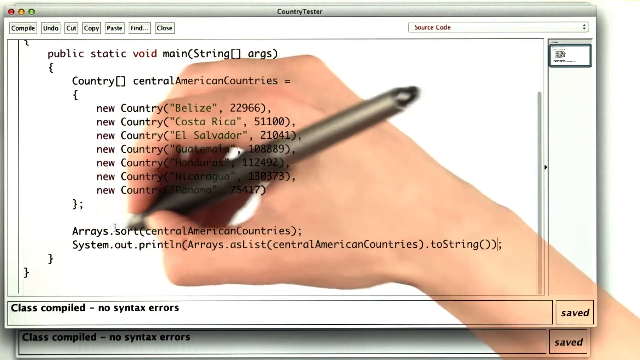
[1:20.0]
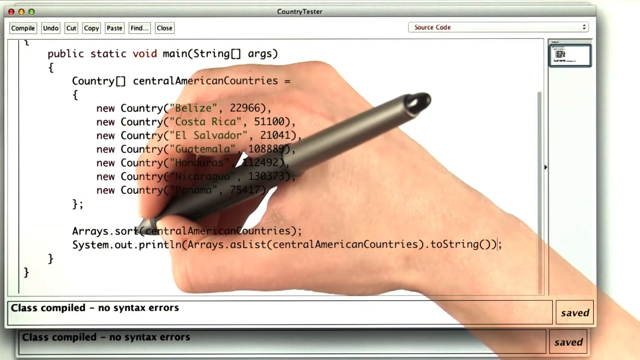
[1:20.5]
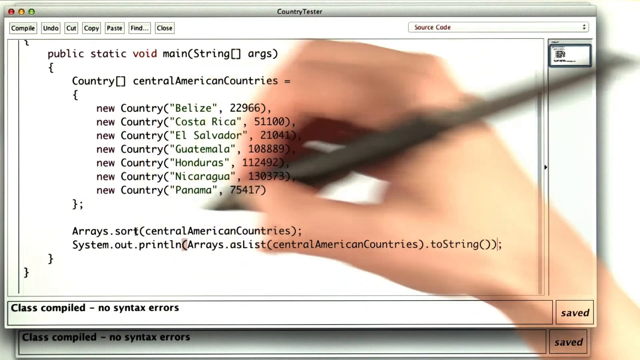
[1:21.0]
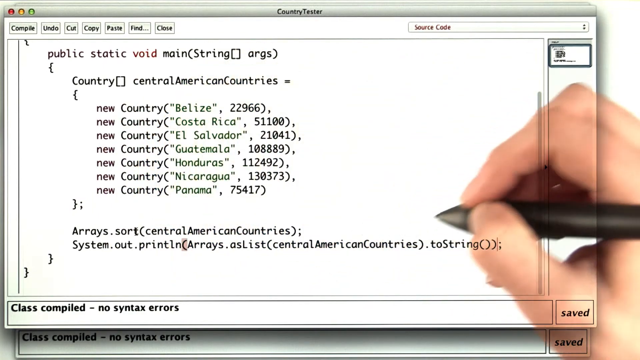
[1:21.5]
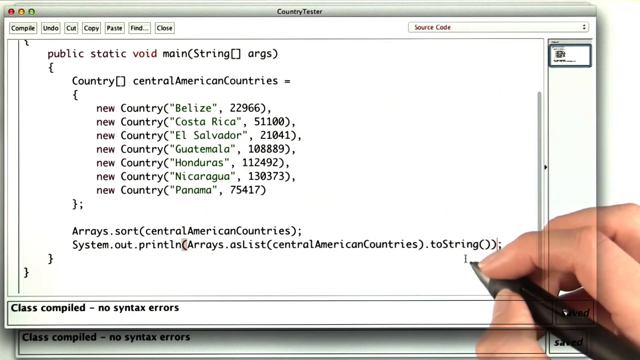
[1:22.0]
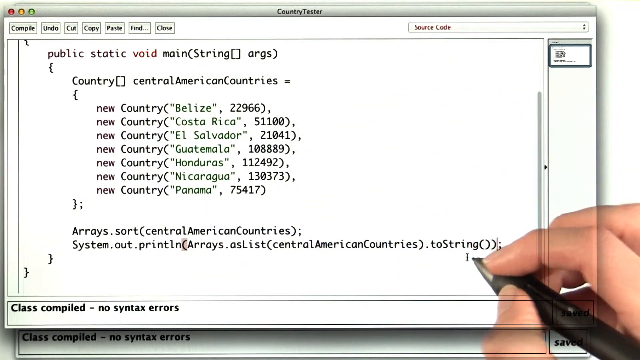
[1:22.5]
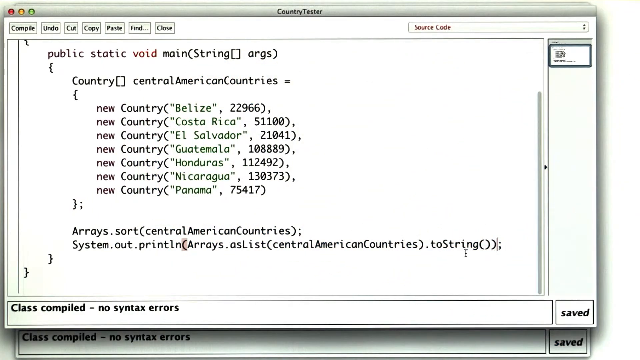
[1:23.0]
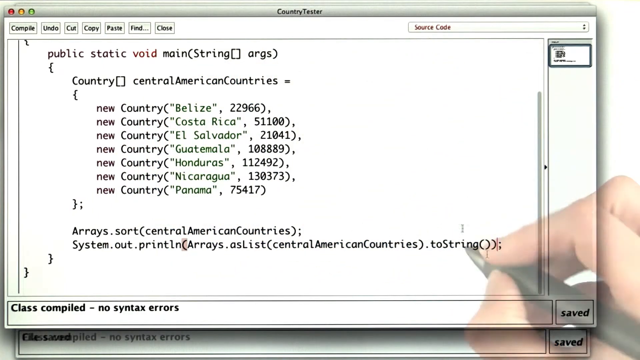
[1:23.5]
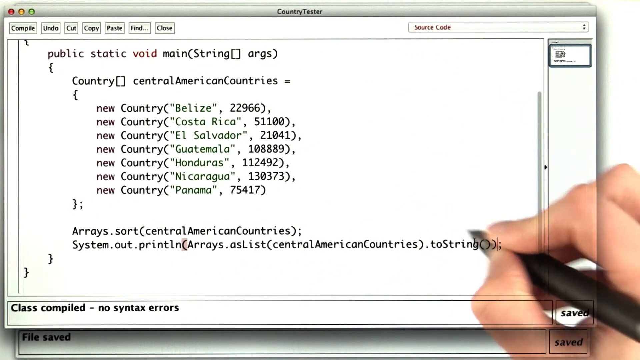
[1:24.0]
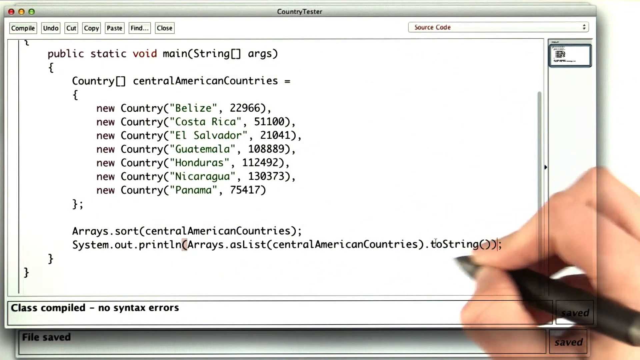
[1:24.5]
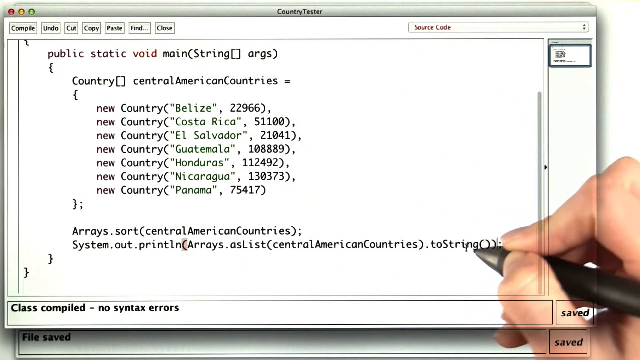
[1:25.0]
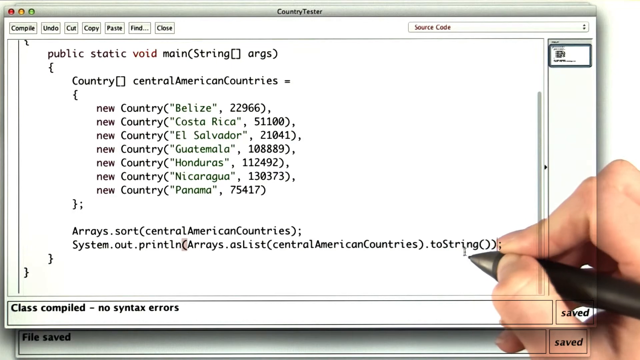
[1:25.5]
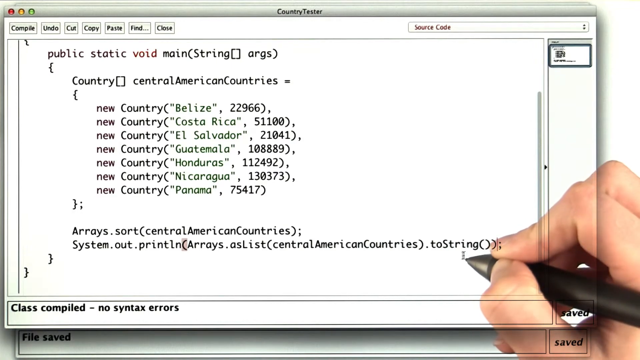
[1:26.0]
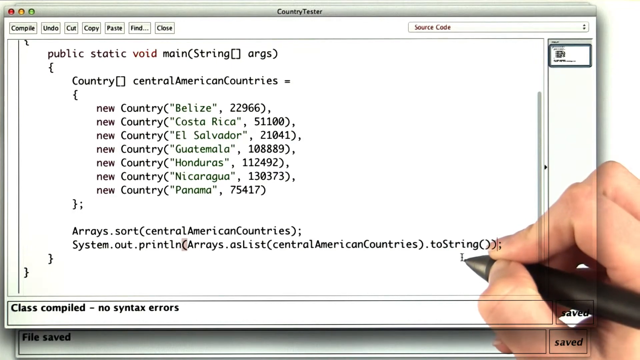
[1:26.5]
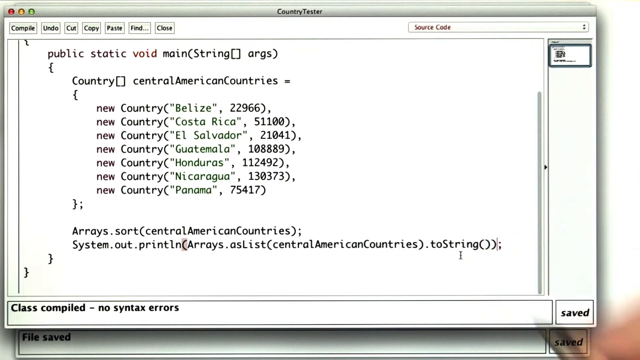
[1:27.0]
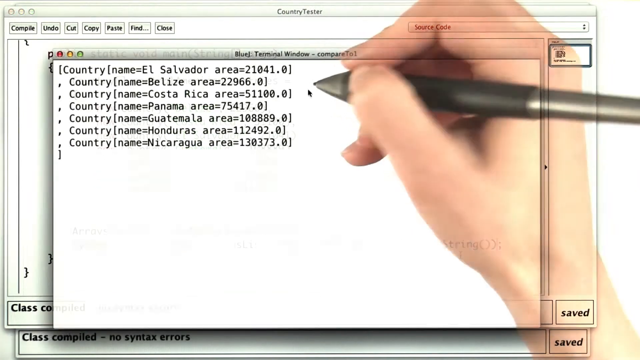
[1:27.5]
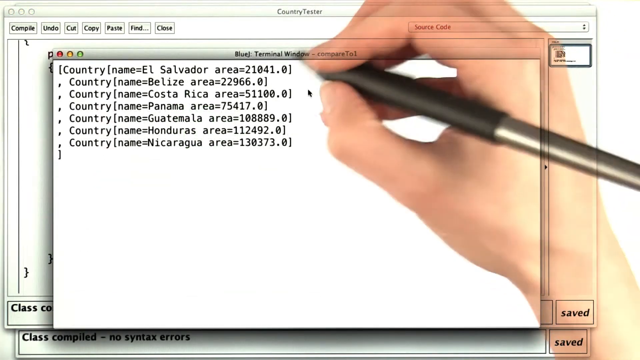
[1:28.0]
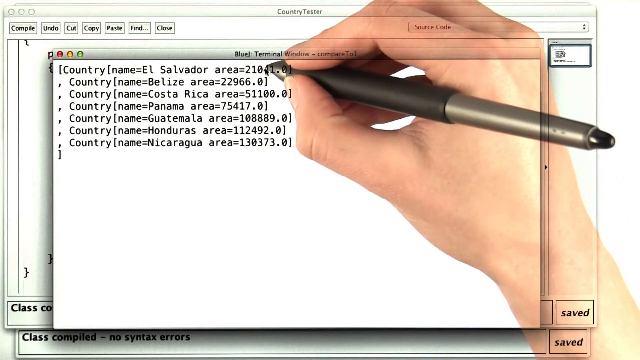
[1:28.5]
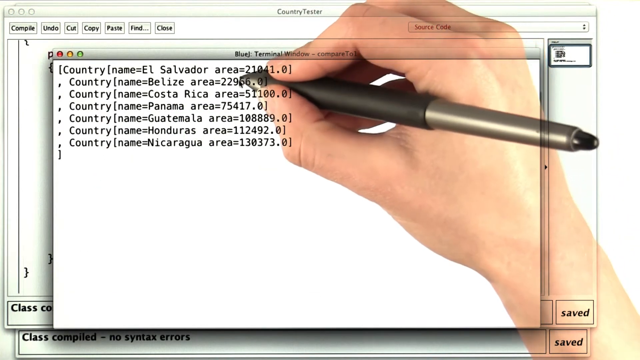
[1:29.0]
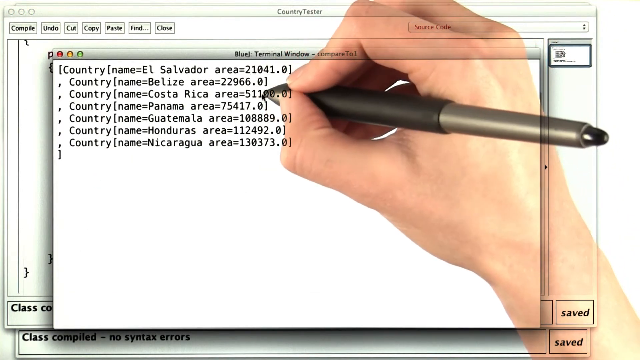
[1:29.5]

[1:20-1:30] The person focuses on the two-string section of the code. All of the data seems to have been added, and the focus is on the system.out.print section. Next to each country name there are some numbers, which the person works on perfecting. No highlighting is used; instead they circle the code with the pen and then kind of tap each one. The right-handed, Caucasian person uses a pen on their laptop, an Apple Mac with an iOS system, to sort or edit the code. The setting is unchanged.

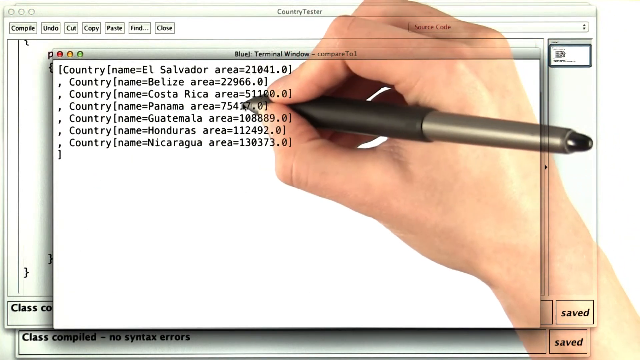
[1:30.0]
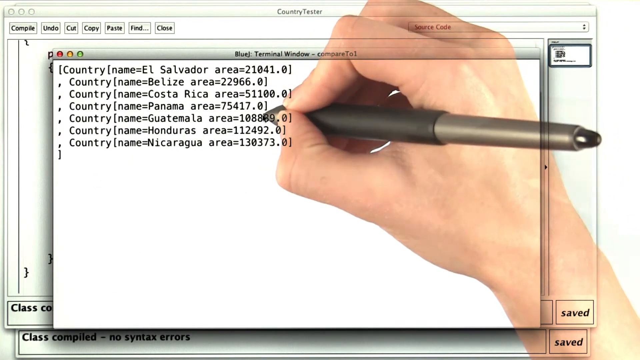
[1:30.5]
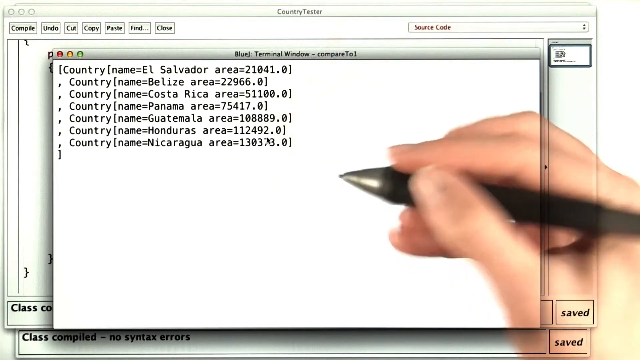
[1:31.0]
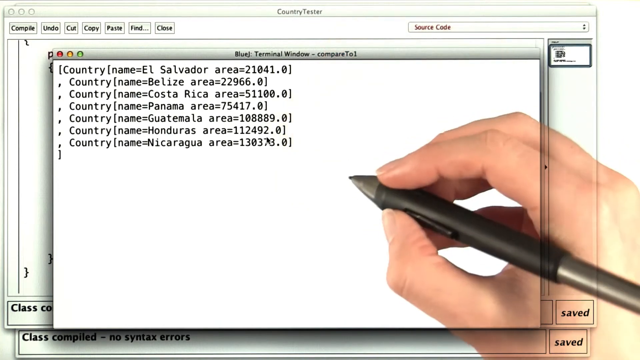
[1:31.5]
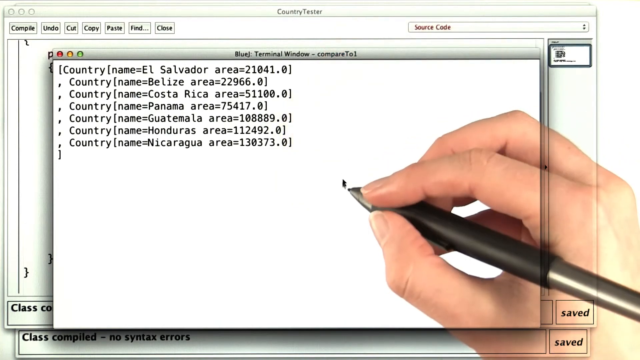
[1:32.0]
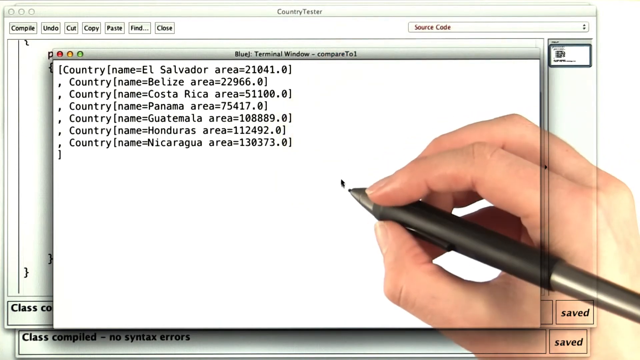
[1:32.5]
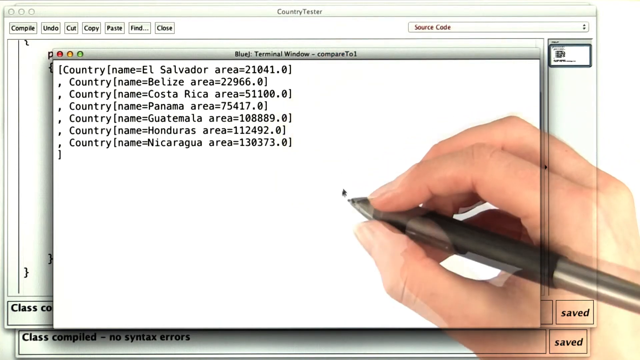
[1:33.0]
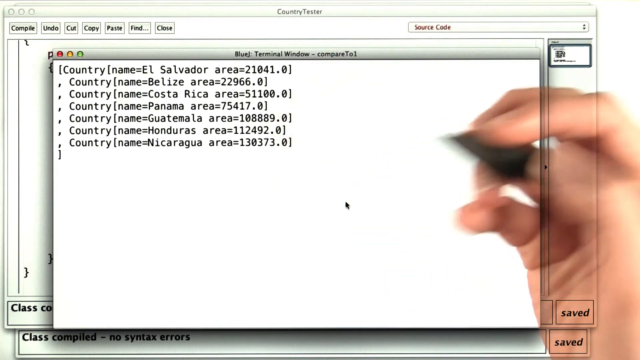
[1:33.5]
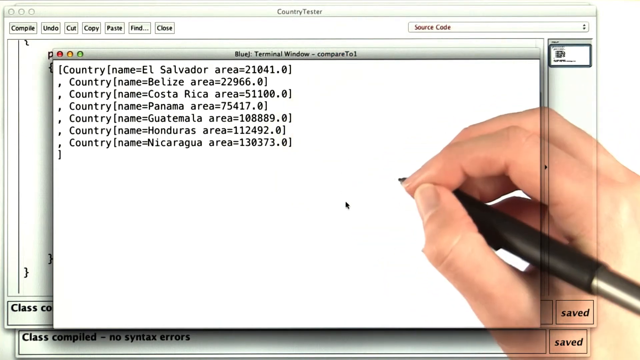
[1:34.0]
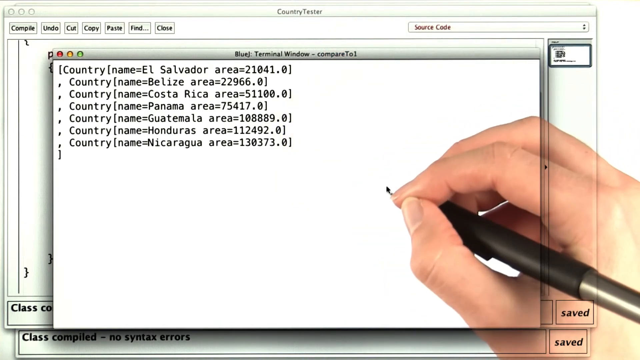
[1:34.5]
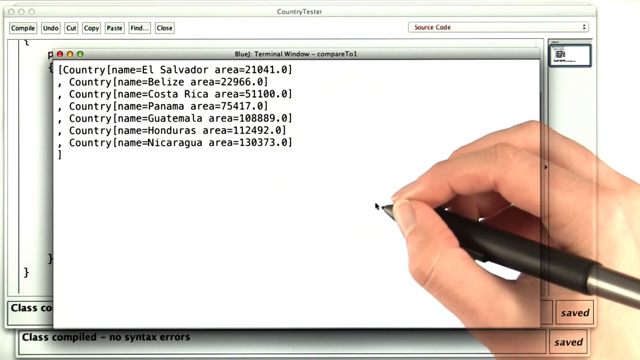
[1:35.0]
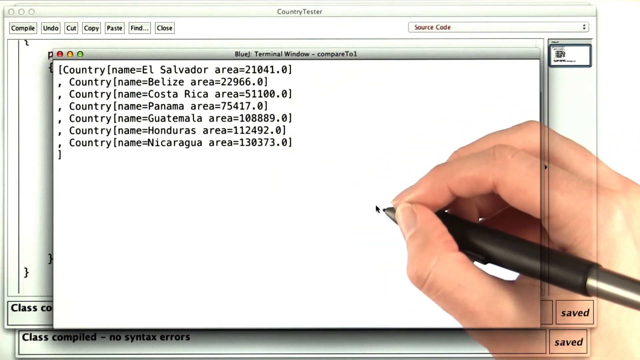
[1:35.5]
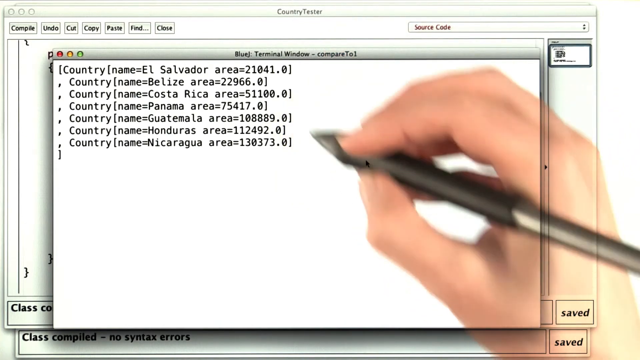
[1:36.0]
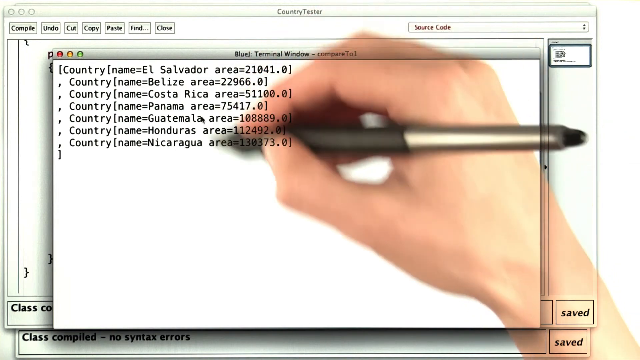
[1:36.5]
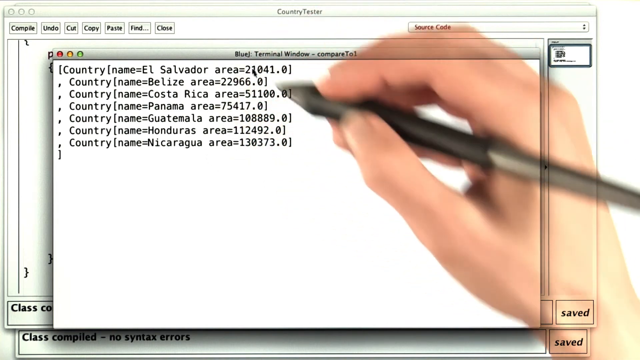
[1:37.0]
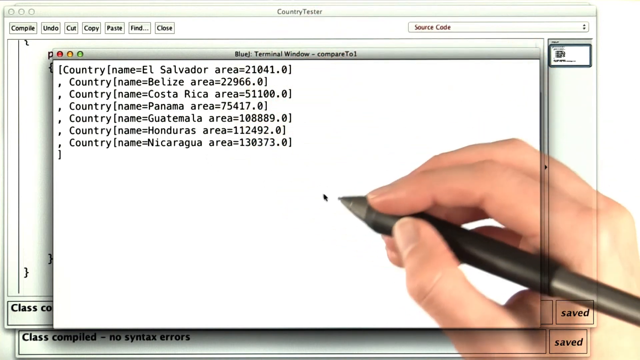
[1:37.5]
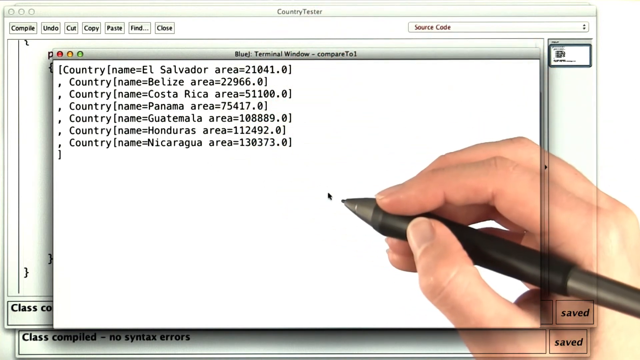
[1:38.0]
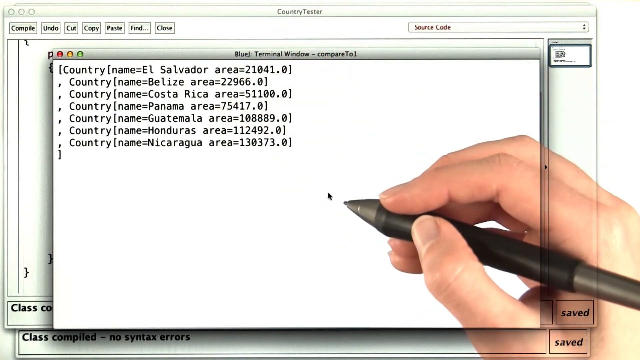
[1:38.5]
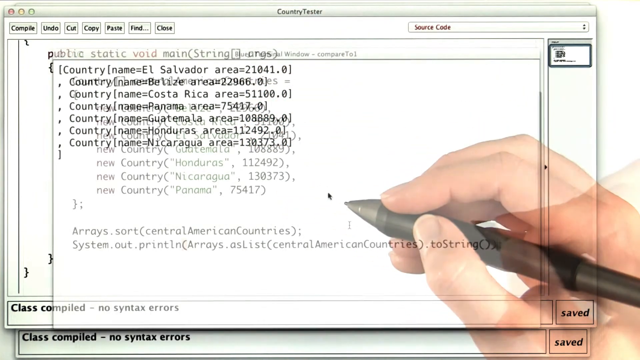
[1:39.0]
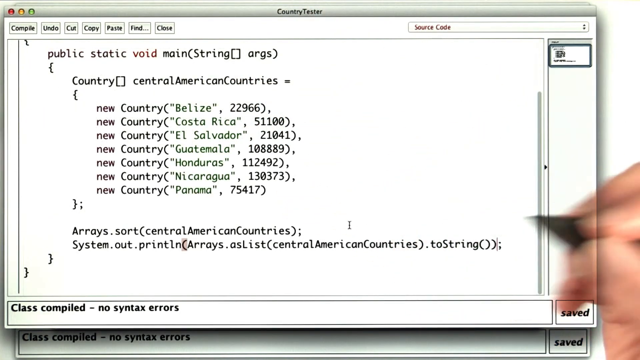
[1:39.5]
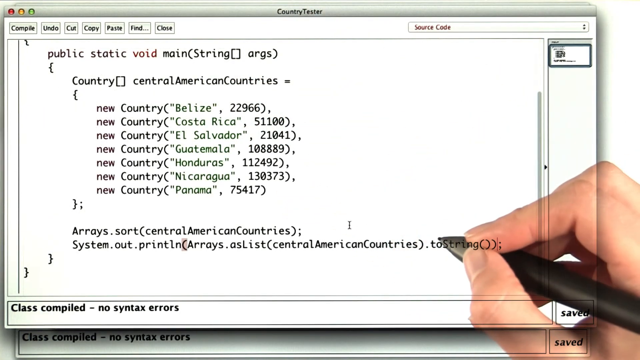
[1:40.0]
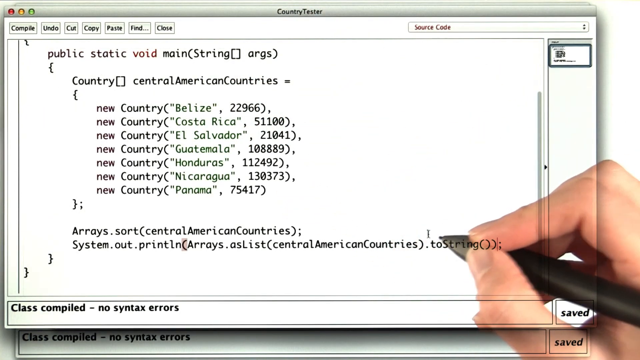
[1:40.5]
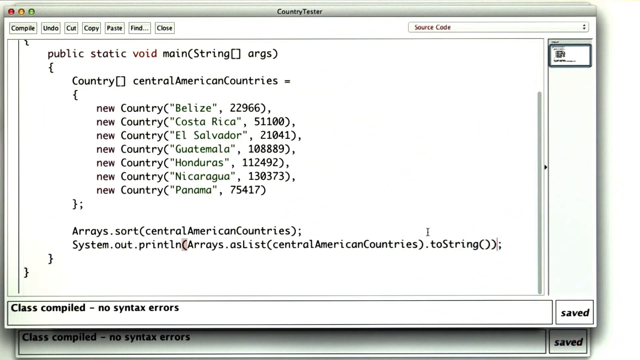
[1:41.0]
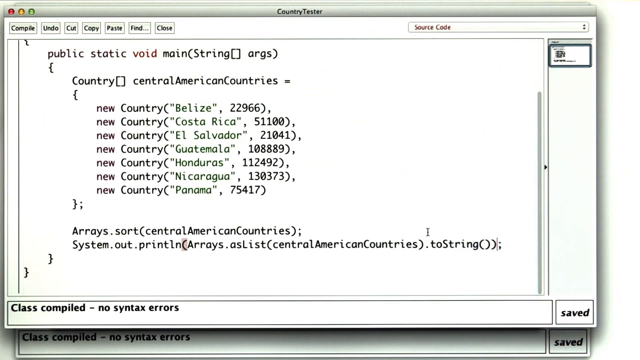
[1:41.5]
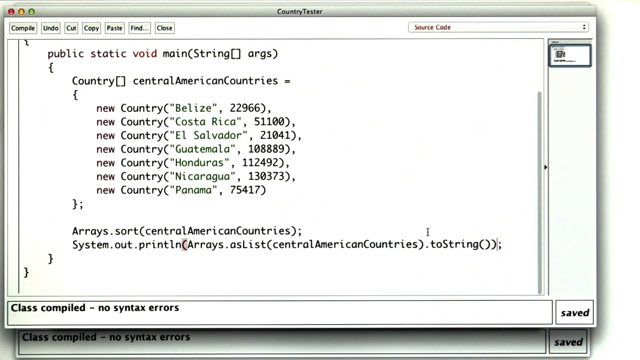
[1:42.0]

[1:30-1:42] The same right-handed, Caucasian person edits the code with a hand on the computer. Not much seems to happen: they finish the string numbers for each country, tapping each one and circling them, apparently as a spot check. The hand is overlaid on the rest of the video. The setting is still the same Mac iOS system.